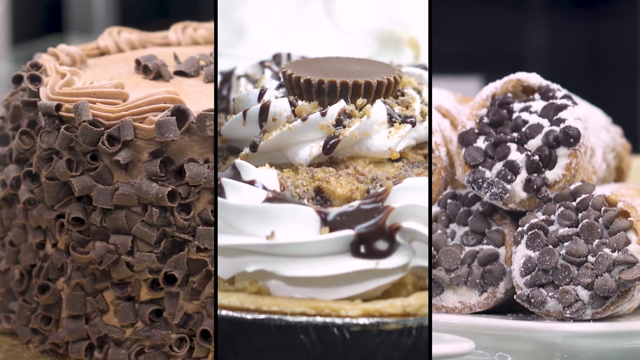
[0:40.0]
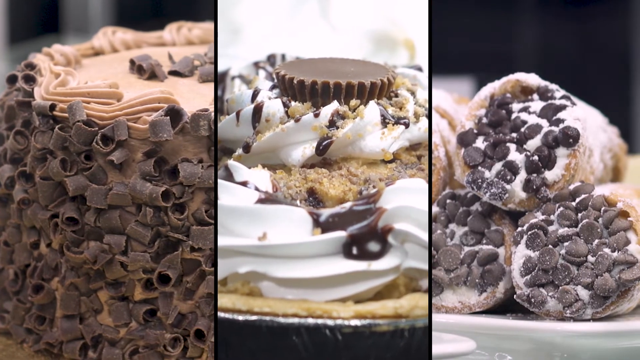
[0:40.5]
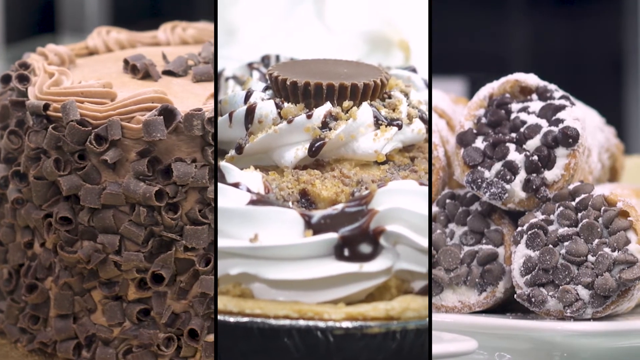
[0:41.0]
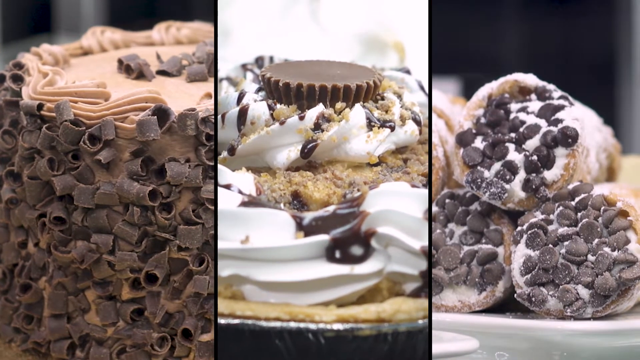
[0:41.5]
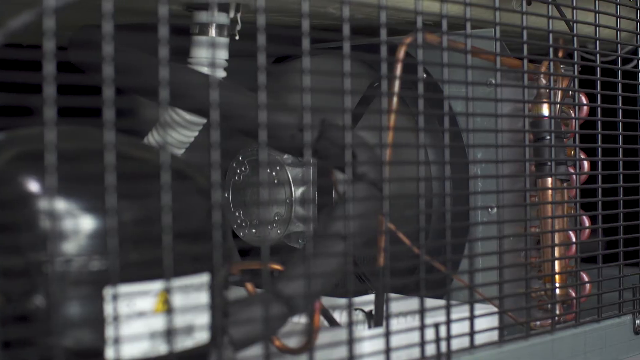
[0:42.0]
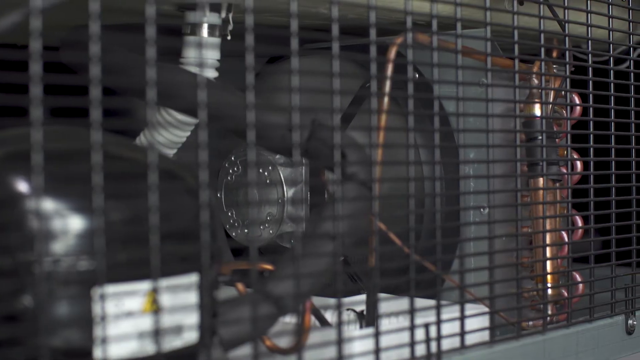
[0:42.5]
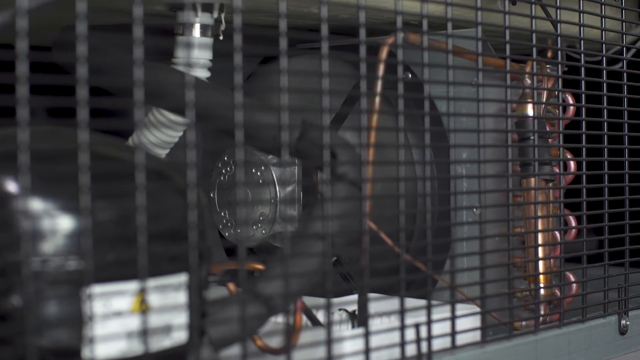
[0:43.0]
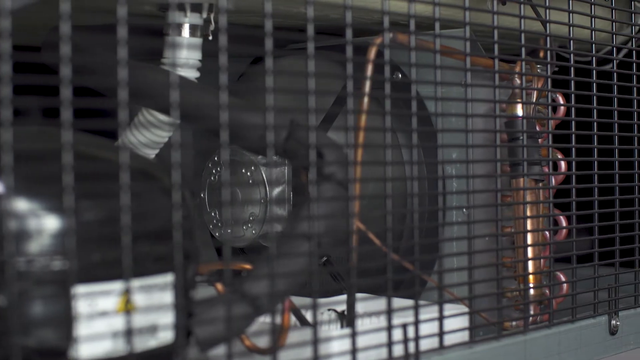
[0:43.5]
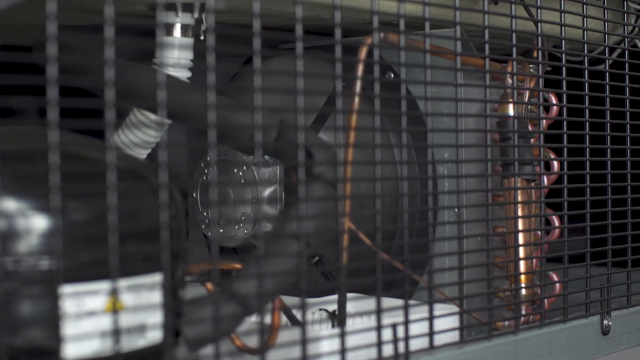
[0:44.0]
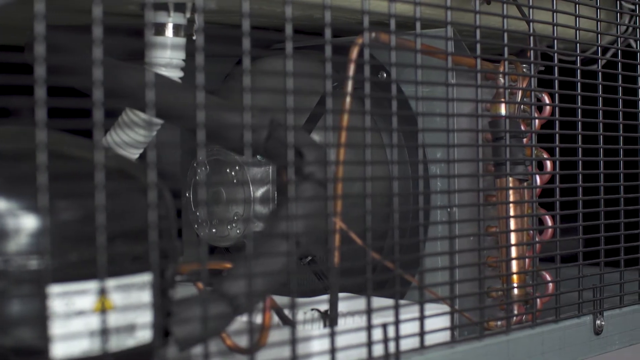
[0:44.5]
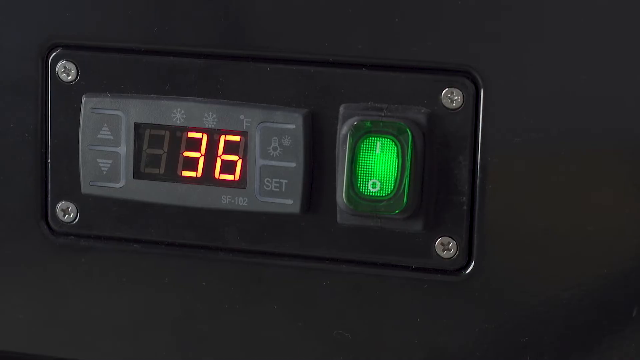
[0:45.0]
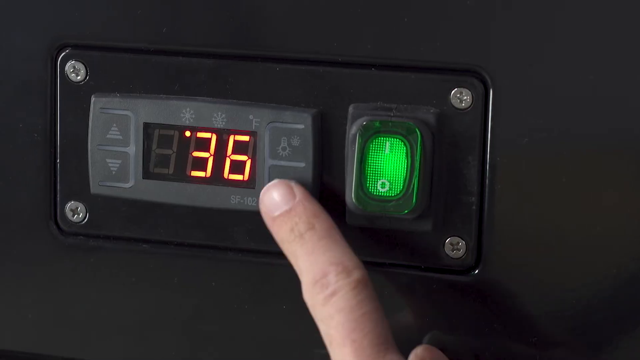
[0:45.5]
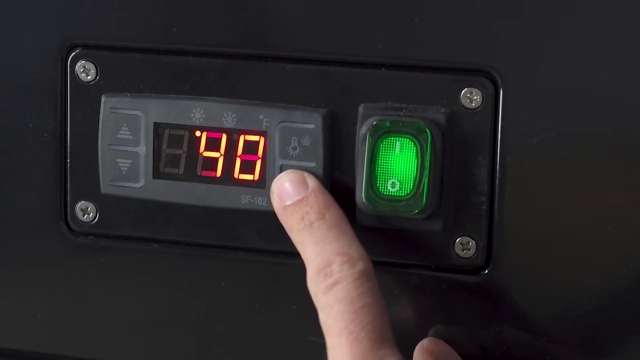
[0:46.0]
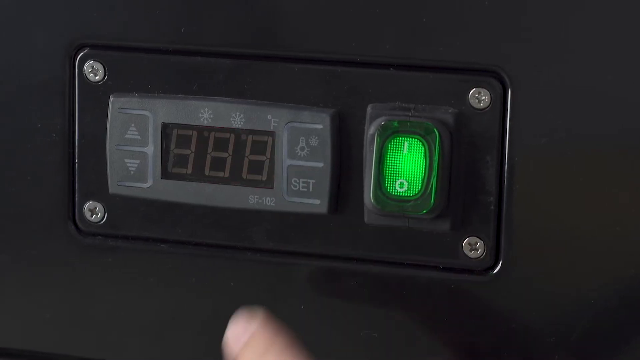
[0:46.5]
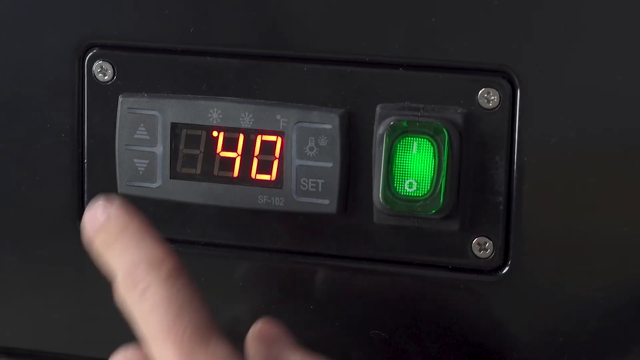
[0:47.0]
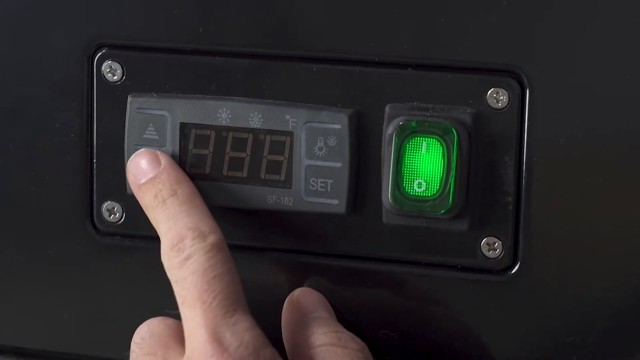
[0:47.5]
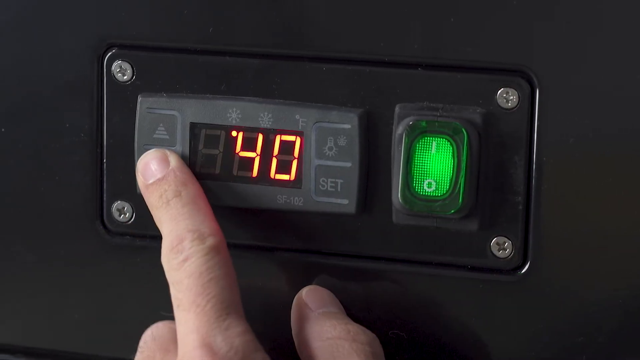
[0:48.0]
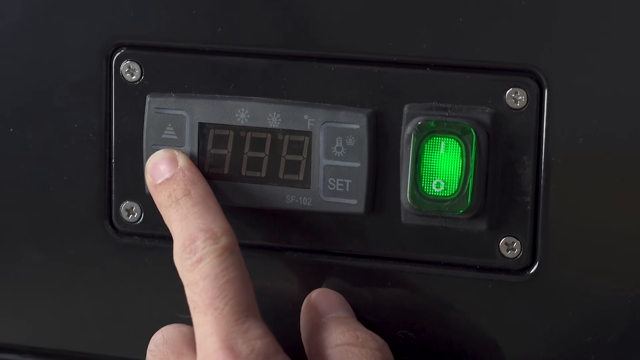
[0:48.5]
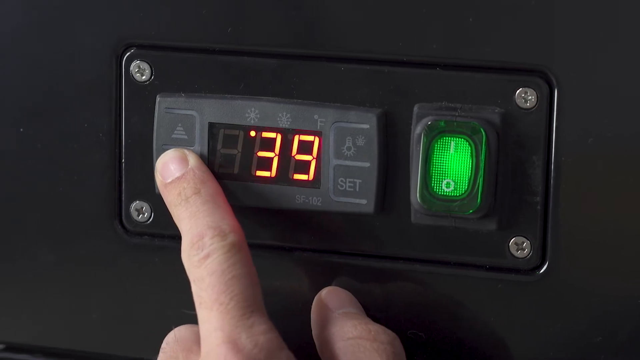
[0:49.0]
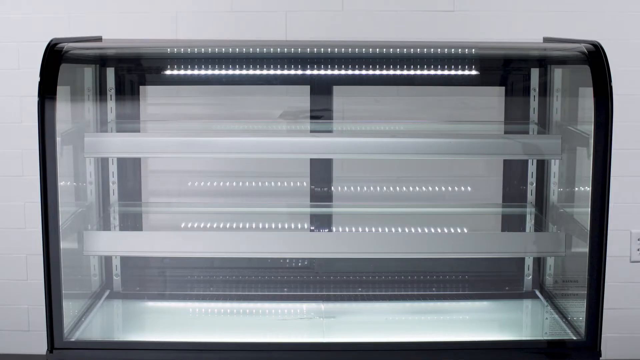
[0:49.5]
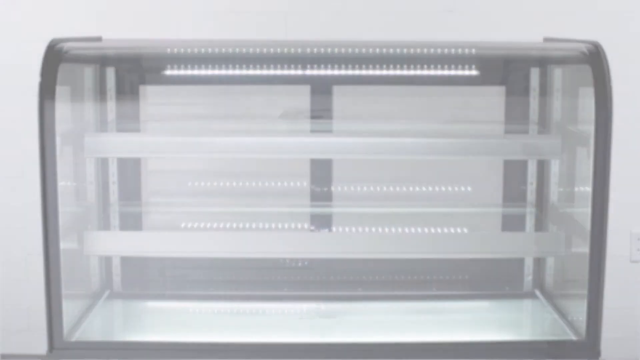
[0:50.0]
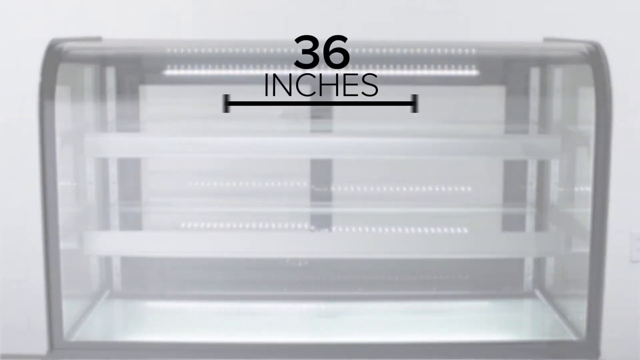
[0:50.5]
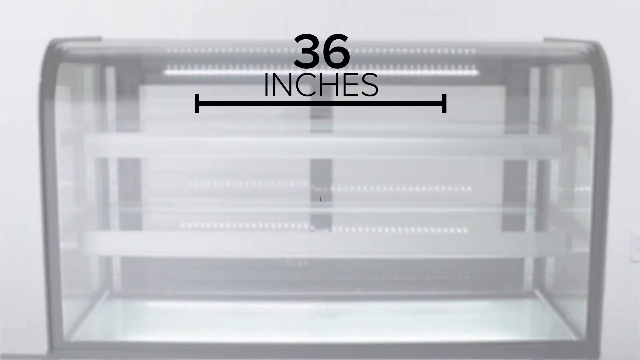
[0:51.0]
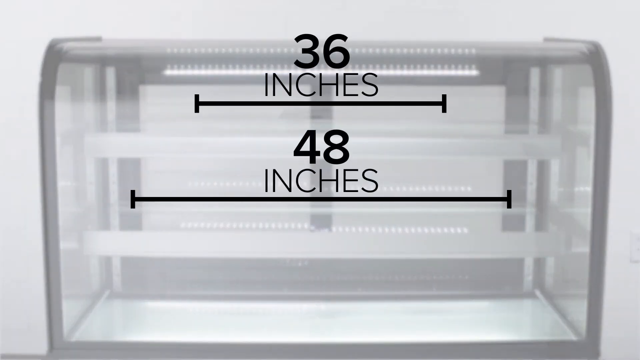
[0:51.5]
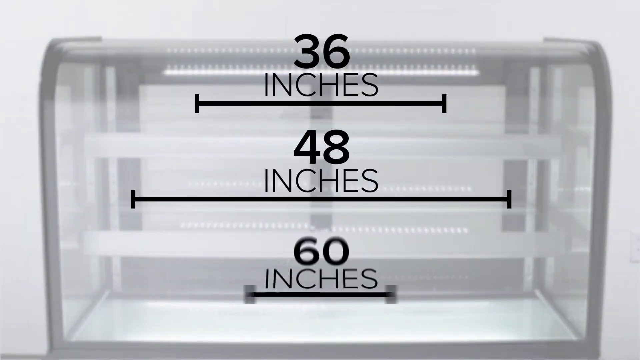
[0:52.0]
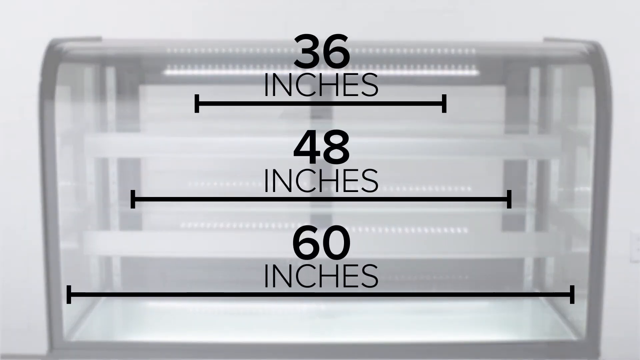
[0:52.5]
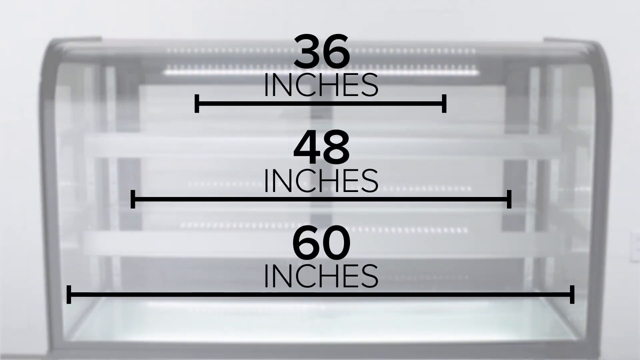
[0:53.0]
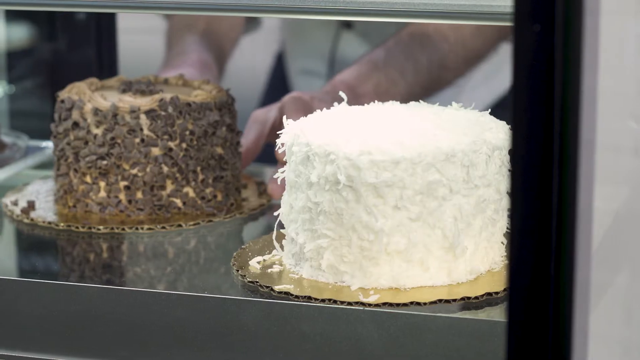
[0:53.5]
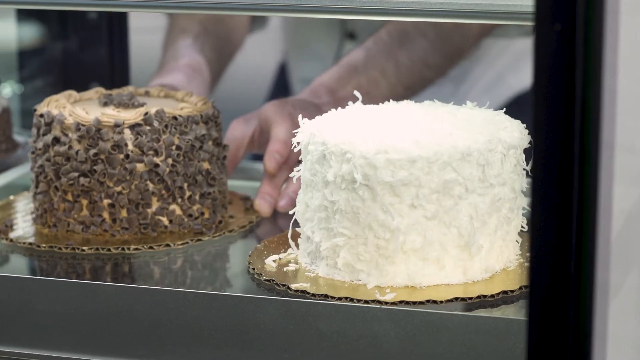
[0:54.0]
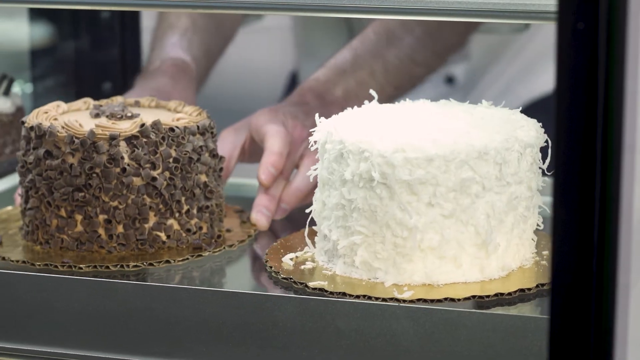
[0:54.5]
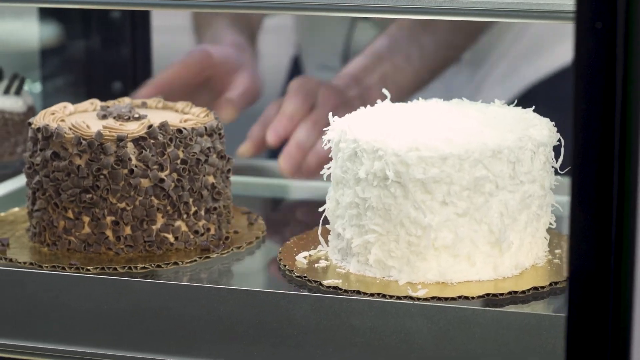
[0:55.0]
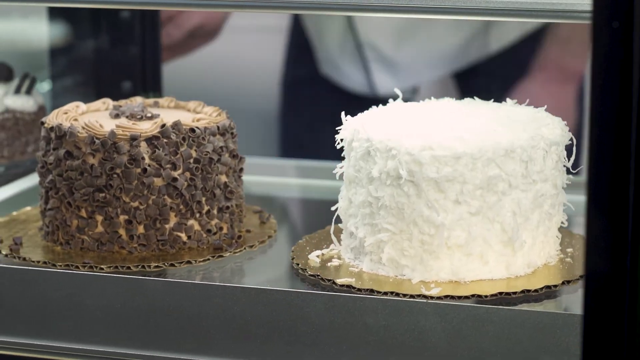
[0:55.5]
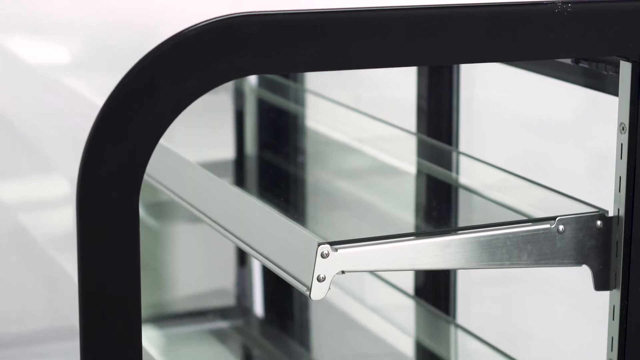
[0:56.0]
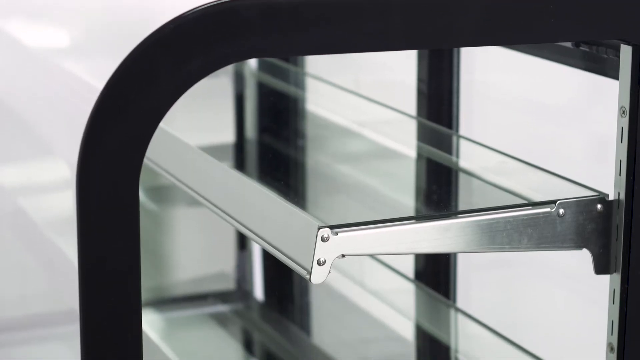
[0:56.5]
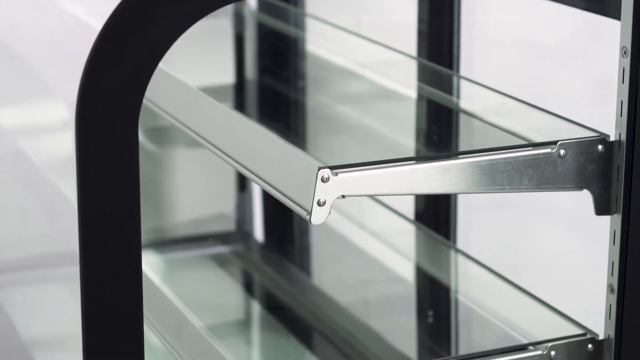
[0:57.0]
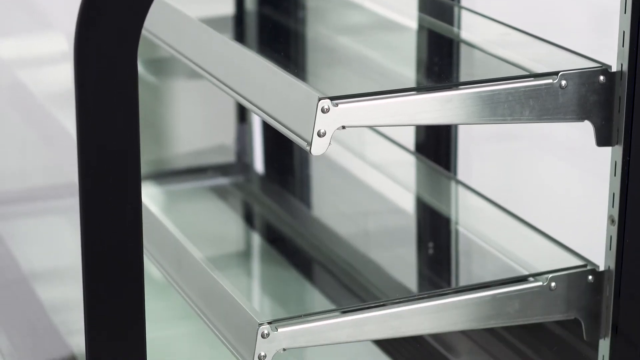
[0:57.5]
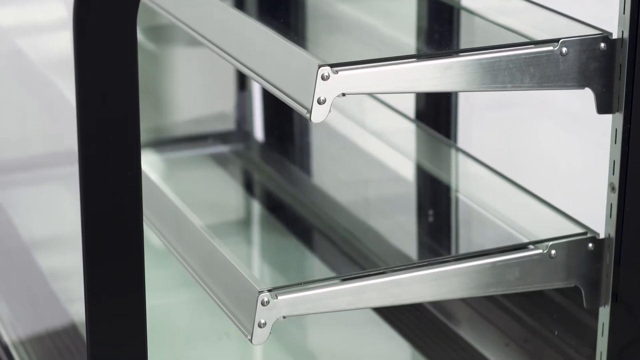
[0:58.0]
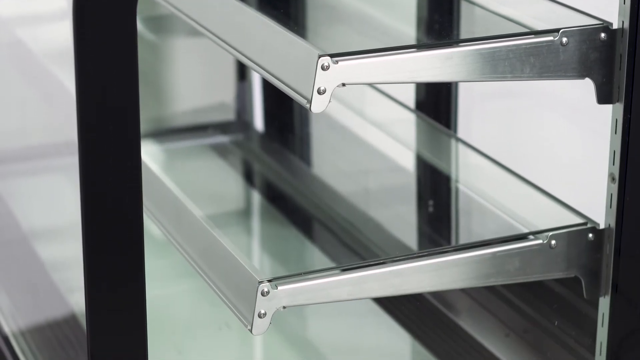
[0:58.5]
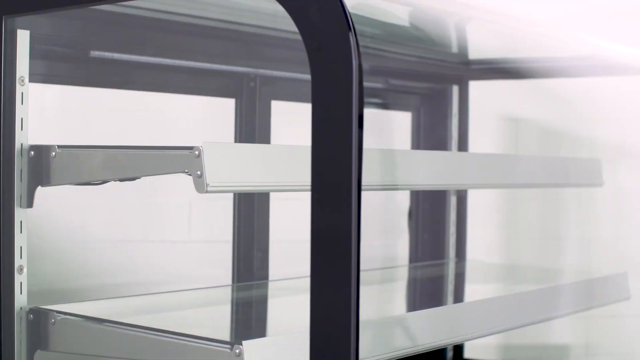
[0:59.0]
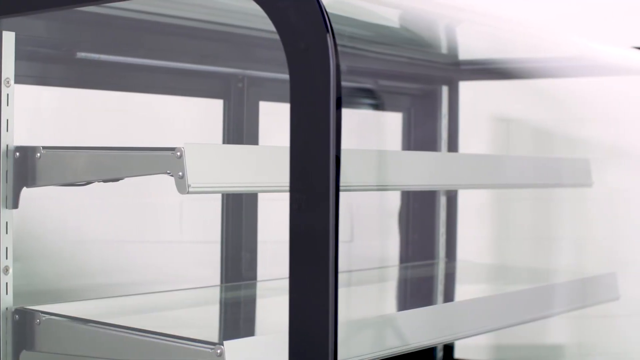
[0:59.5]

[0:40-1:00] An oven that is preheated appears; someone sets a timer there and then puts some cakes inside. The unit seems to be a cold room or some sort of refrigerator, with sizes of 36 inches and 48 inches, and it has glass shelves. It apparently is also a refrigerator, holding three types of cakes: a cake with something like chocolate on top, a caramel cake with a decoration of some sort of chocolate, and something like a donut but not a donut, with cream inside and some chocolate chips on top.